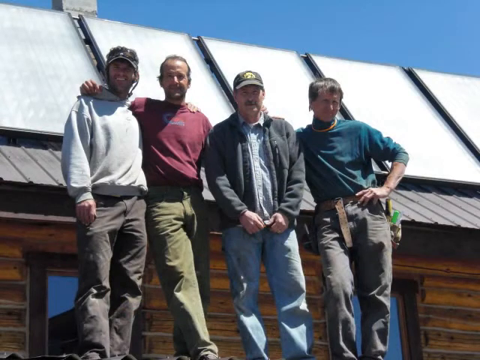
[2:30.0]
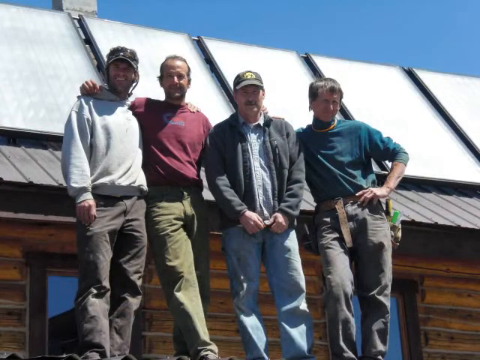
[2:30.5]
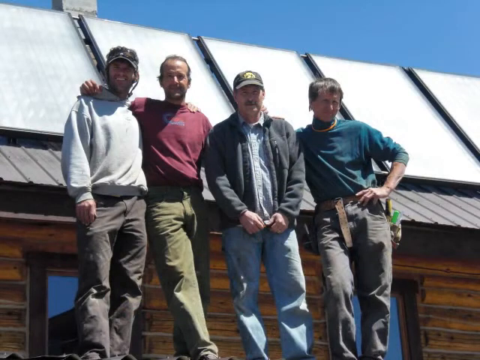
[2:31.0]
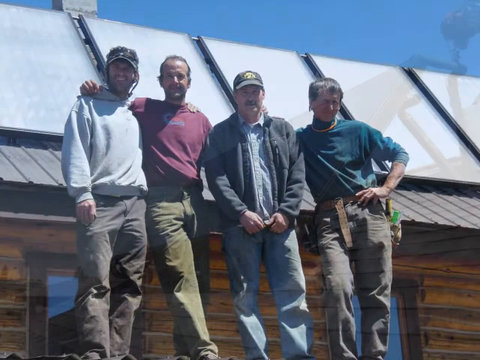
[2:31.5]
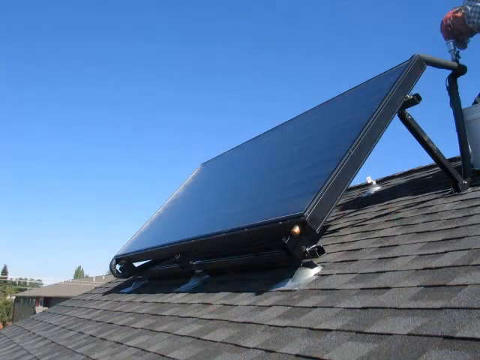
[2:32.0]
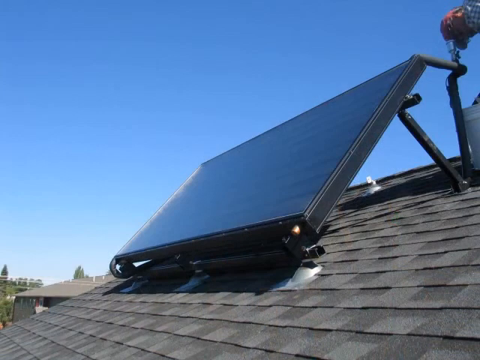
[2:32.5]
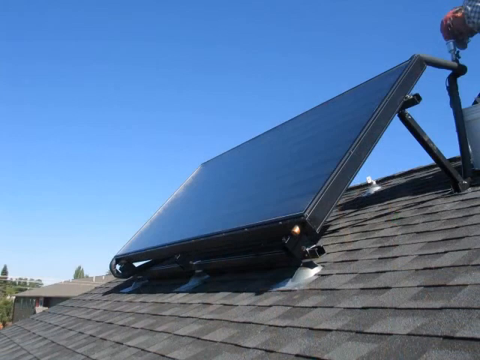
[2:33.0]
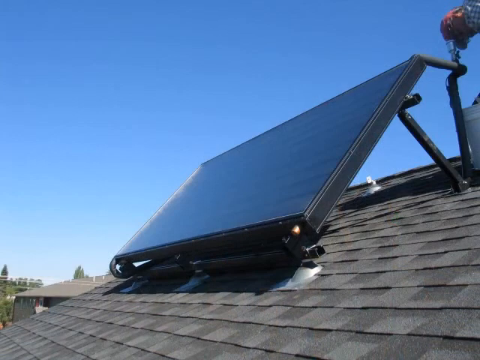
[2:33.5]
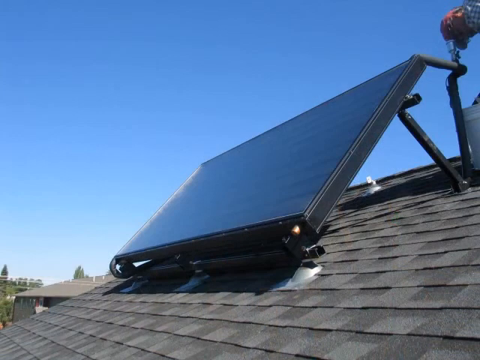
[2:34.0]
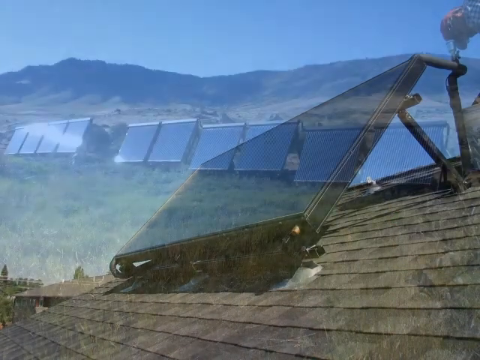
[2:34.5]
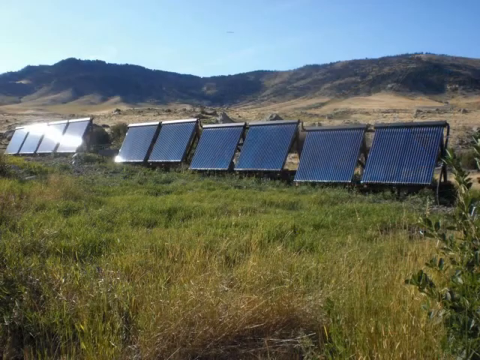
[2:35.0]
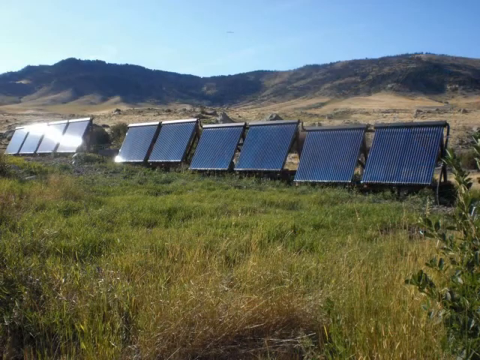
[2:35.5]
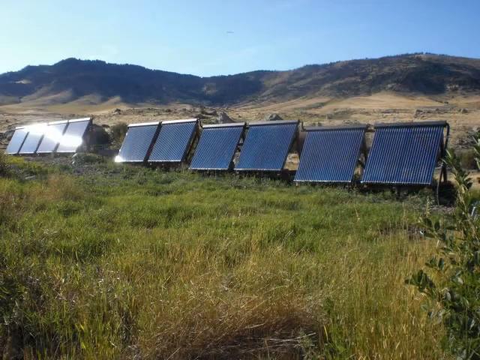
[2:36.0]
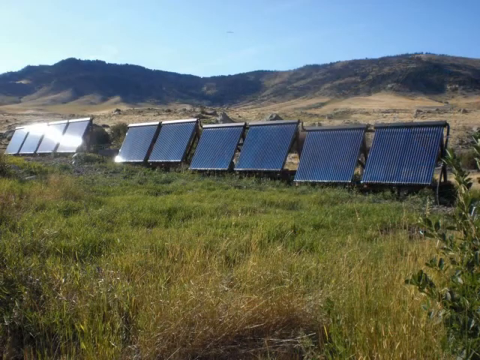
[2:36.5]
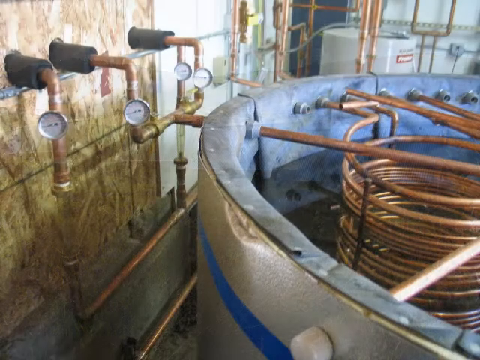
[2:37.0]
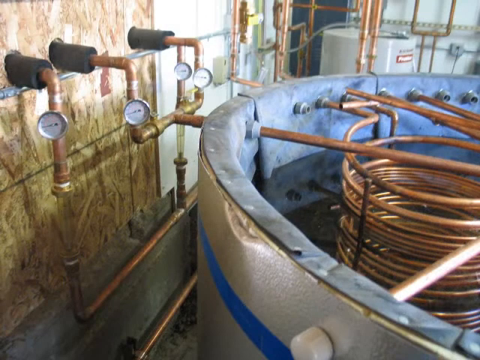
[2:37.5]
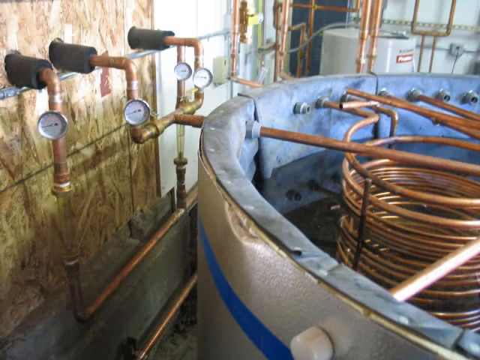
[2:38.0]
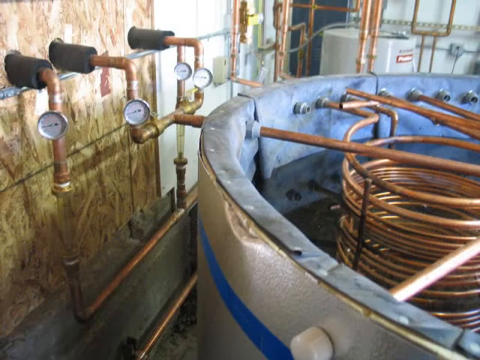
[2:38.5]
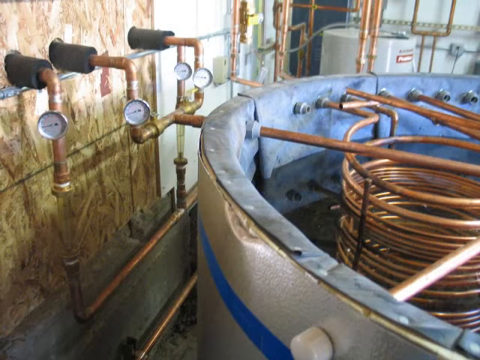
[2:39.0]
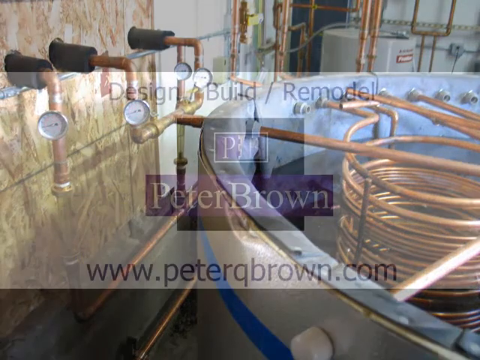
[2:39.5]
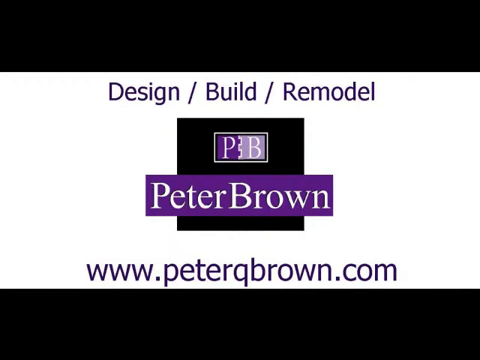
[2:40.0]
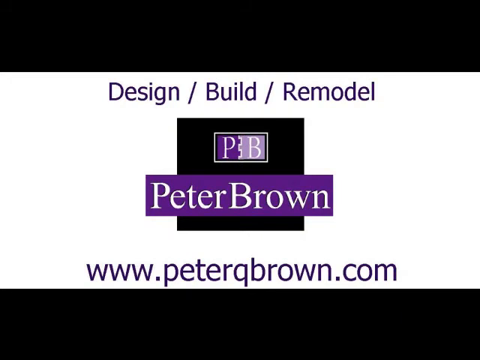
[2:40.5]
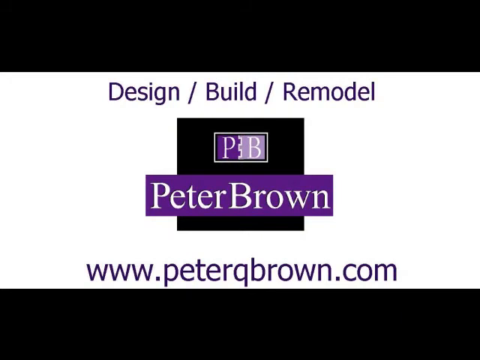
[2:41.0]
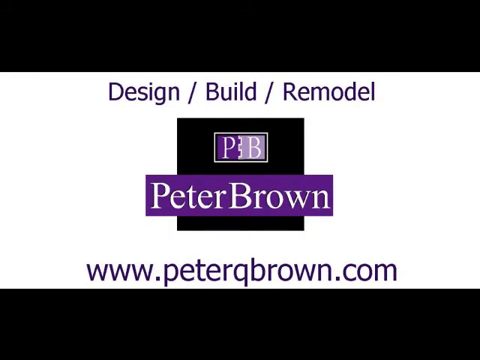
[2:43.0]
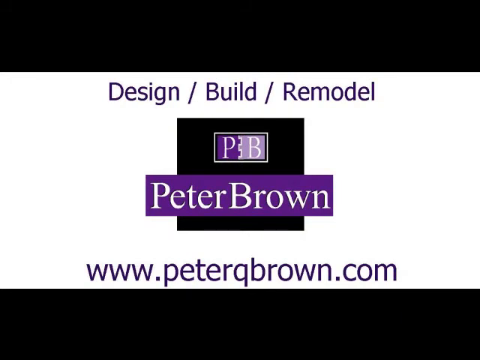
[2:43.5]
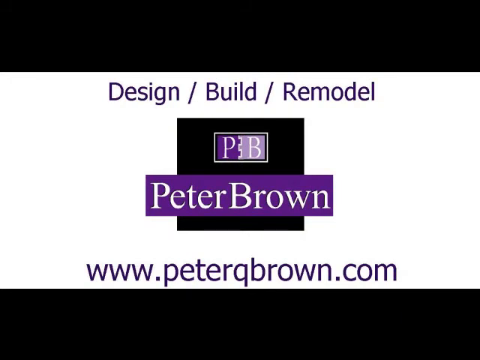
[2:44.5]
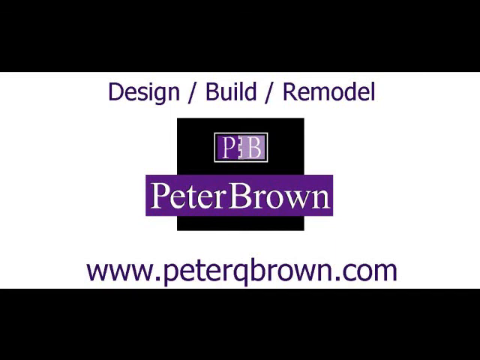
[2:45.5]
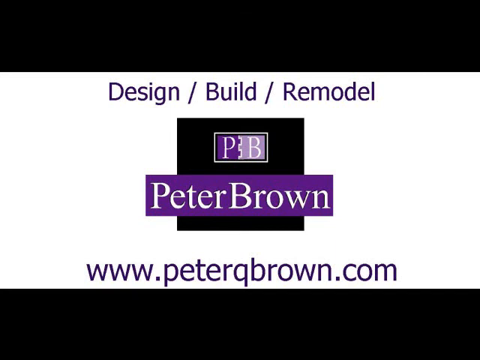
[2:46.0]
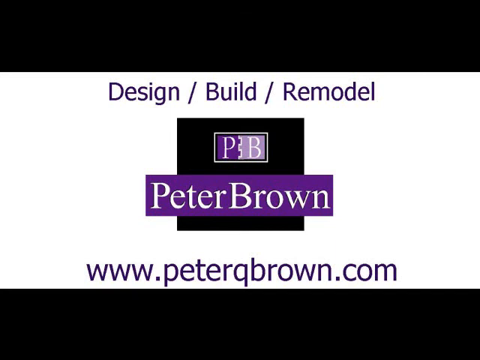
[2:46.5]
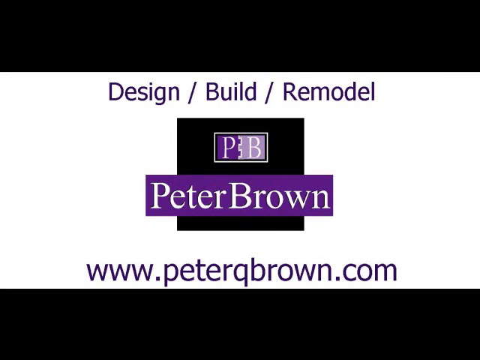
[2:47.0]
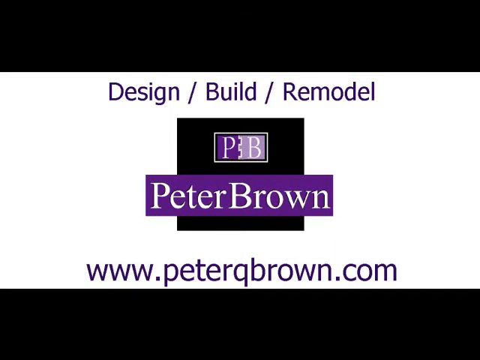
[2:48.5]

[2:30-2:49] One of the panels is attached to a roof under a blue sky. The next image seems to show a row of these panels in a field, apparently freestanding, with no house or roof anywhere near and mountains in the distance. Next, pipes come out of a wall, alongside what looks like the inside of one of the tanks: a big coil of metal, maybe brass or copper, inside a tank with no lid. The final screen matches the beginning: a black background with a white box that says "design, build, remodel www.peterqbrown.com", with the Peter Brown logo in the centre. The screen fades to black.